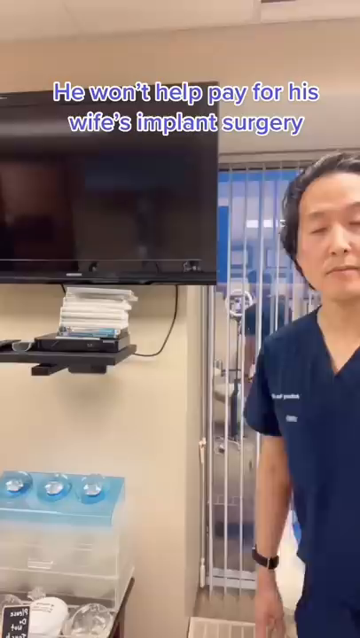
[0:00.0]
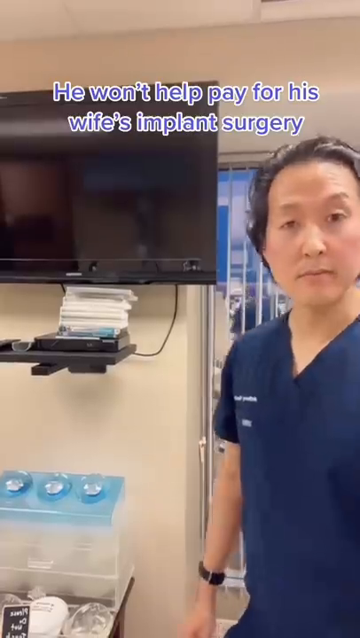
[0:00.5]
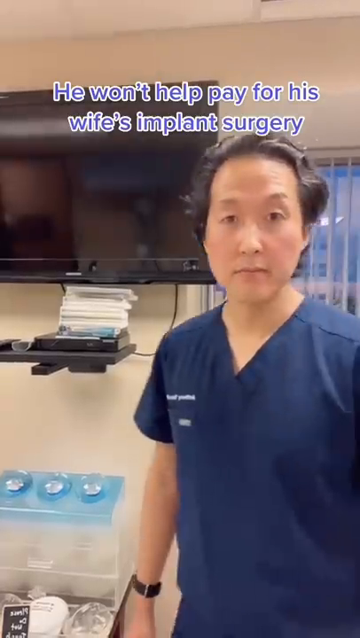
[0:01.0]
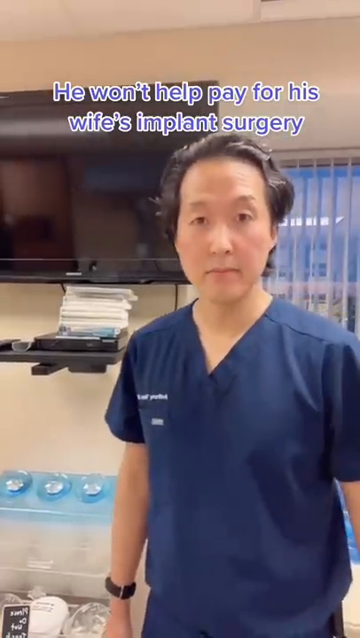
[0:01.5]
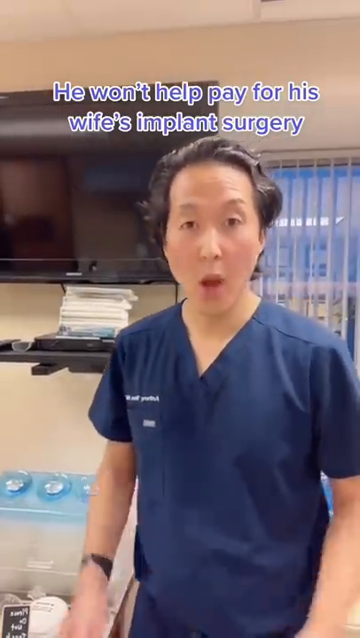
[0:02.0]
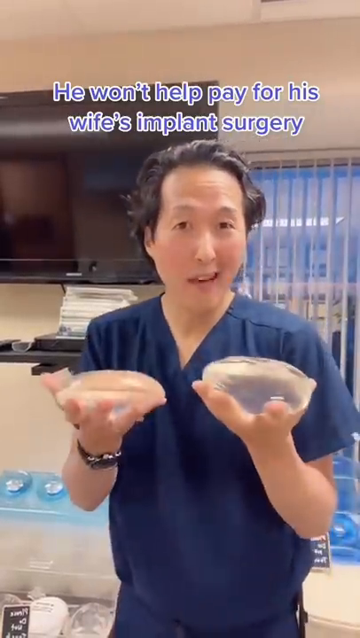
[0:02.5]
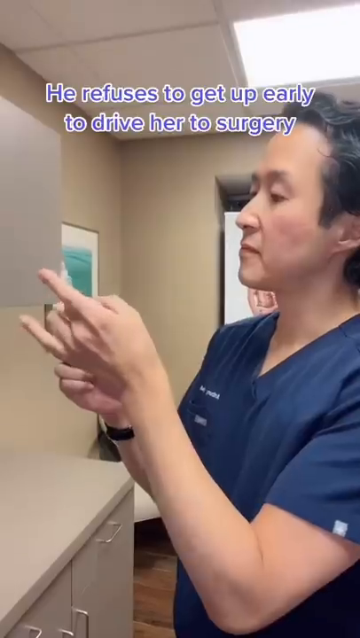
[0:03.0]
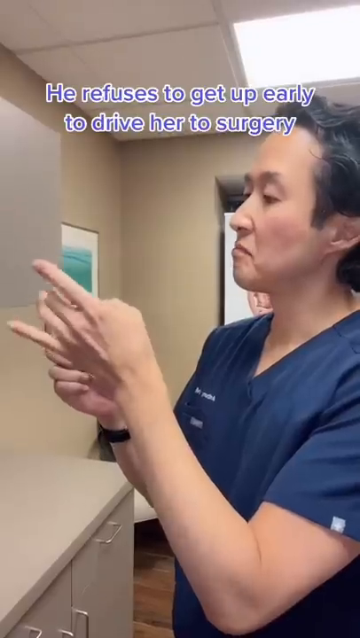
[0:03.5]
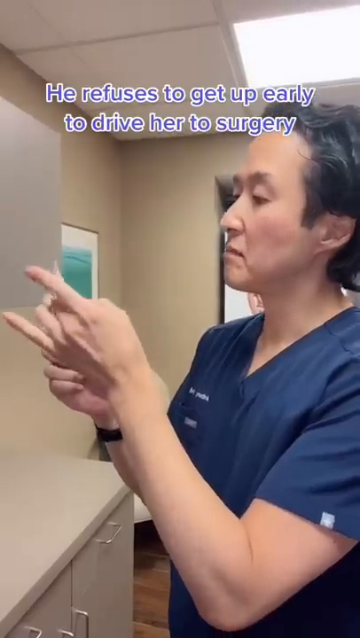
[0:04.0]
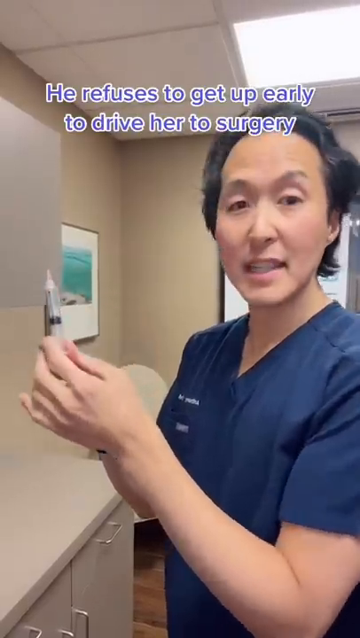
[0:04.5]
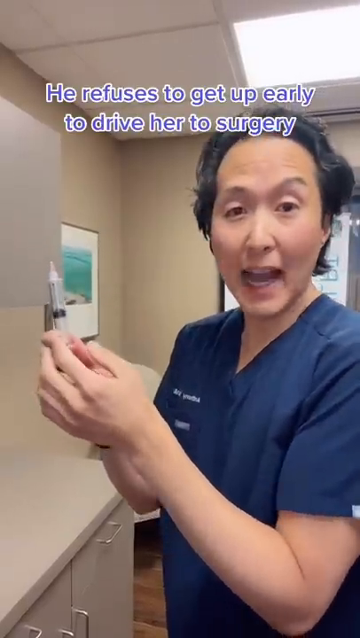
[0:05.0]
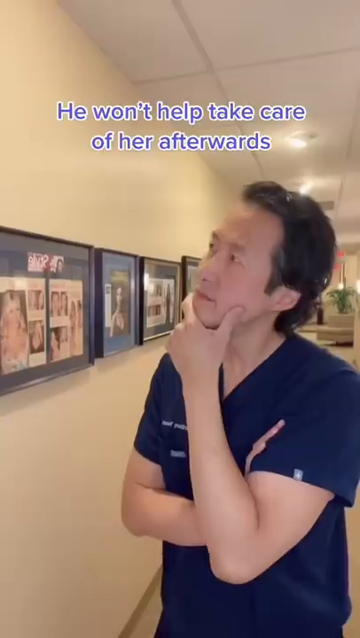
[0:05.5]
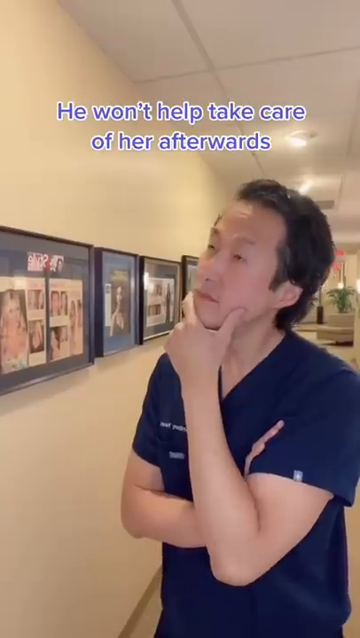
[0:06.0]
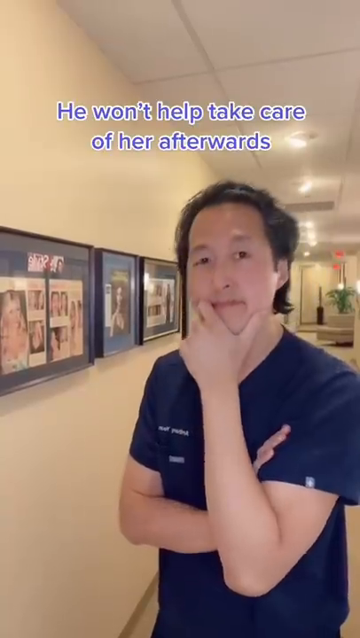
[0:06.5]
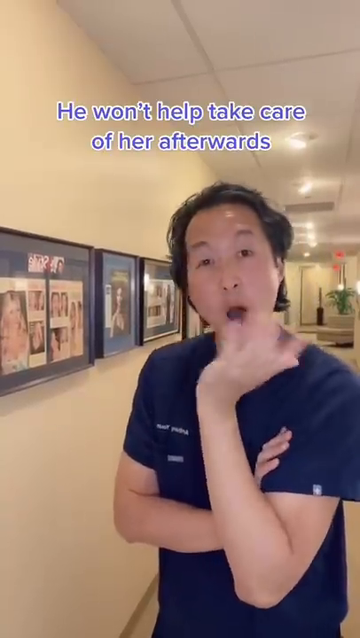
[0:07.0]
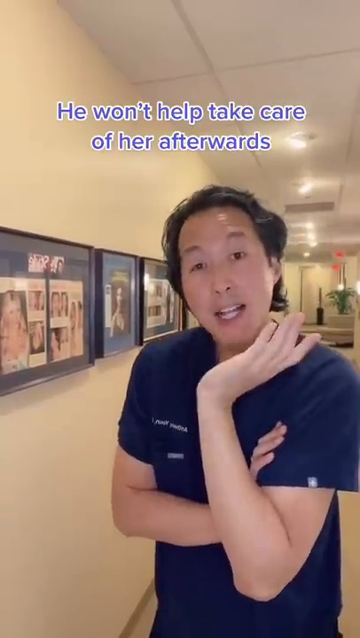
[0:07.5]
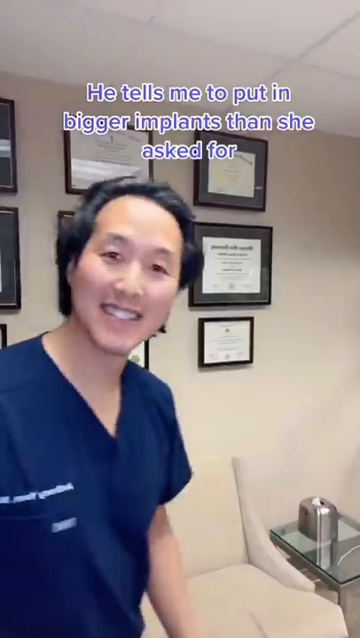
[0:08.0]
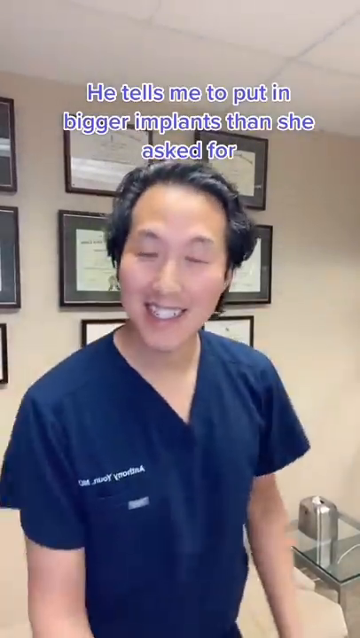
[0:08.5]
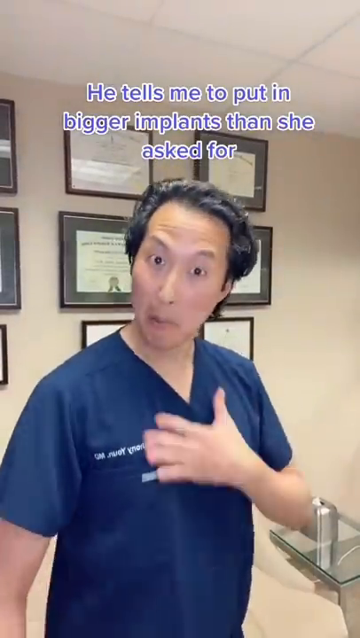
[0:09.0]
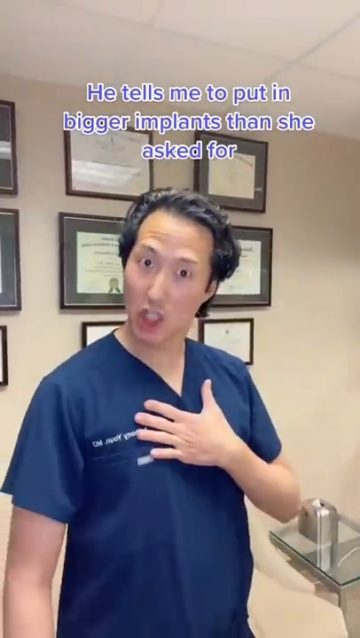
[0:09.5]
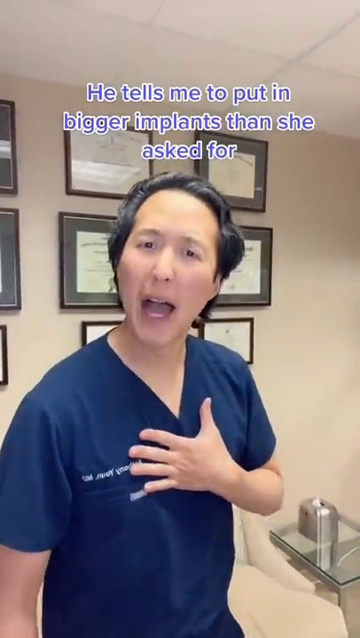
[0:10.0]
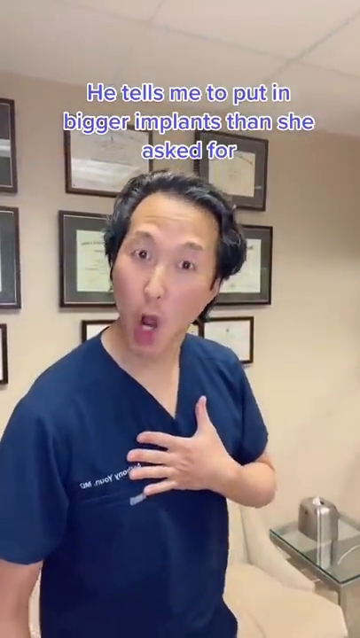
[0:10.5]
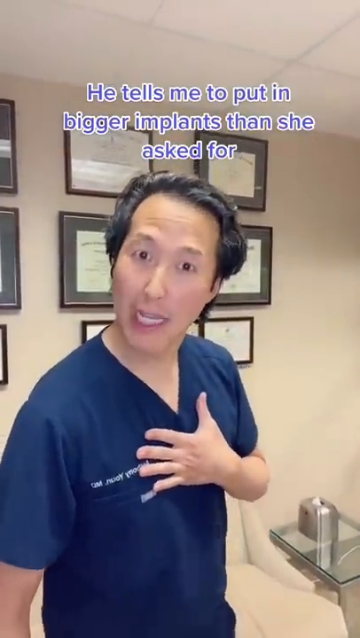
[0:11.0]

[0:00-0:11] Shot from a point-of-view perspective, the video shows someone talking to a plastic surgeon. The surgeon appears Asian, with fairly long black hair and a dark blue smock top. He does different things: he looks at pictures on a wall, holds a syringe up in his hand as he taps it, and holds a small pouch of solution in one hand. The person asks the doctor questions that are perhaps inappropriate; he appears to be the husband of the person who is going to undergo implant surgery, and he apparently does not take the surgery as seriously as his wife would want. At the end, he says he won't even pay for his wife's implant surgery.